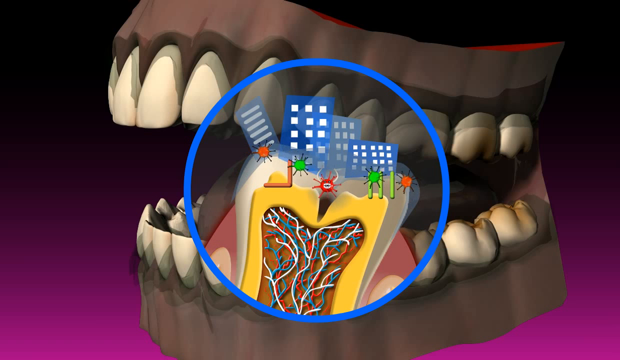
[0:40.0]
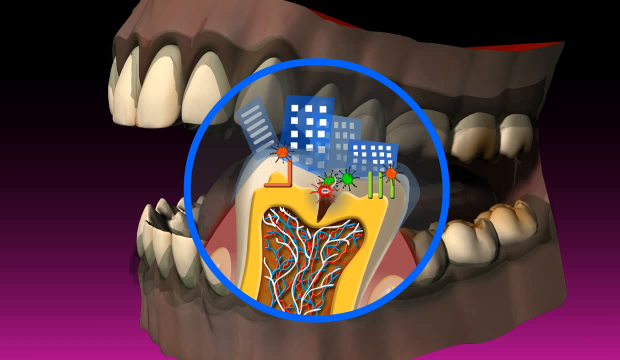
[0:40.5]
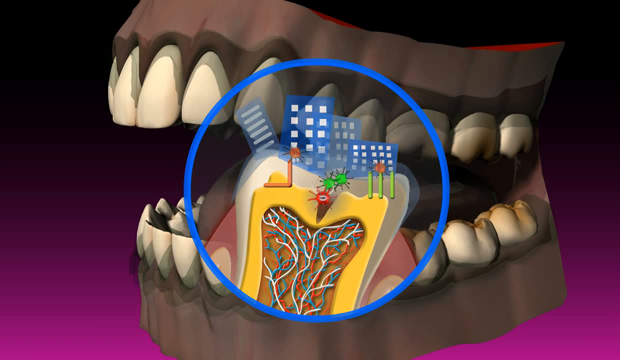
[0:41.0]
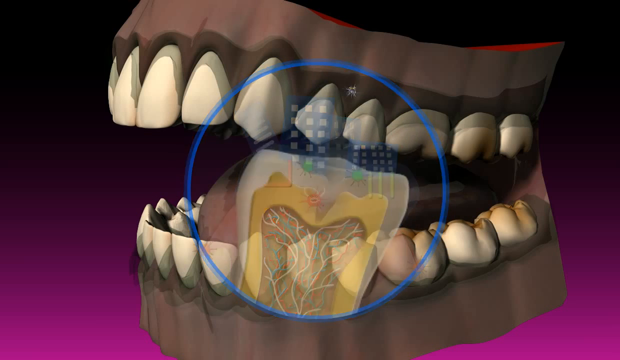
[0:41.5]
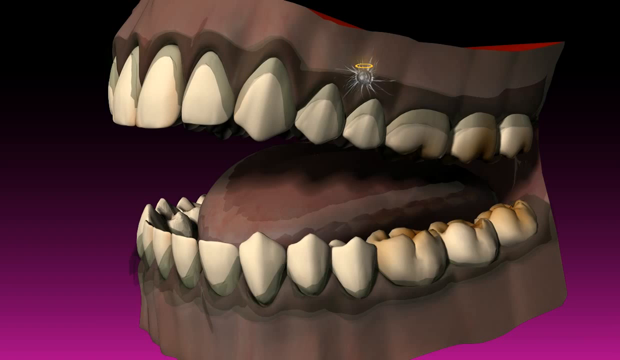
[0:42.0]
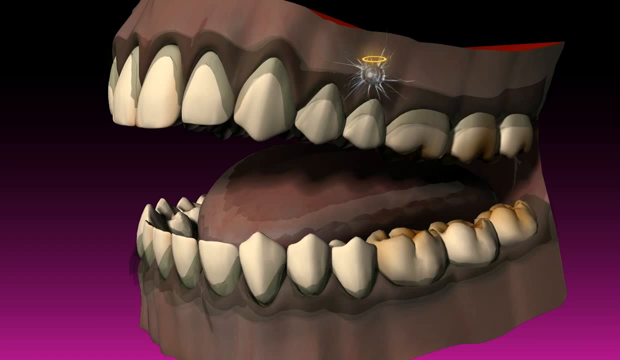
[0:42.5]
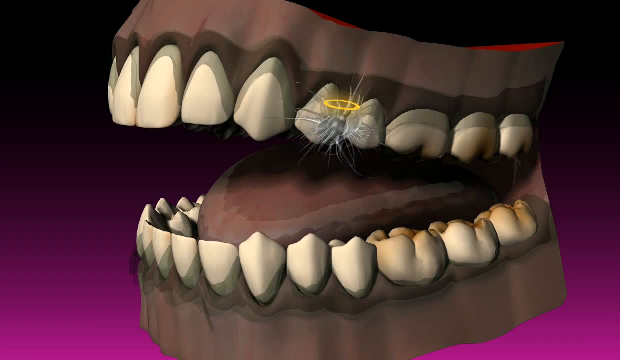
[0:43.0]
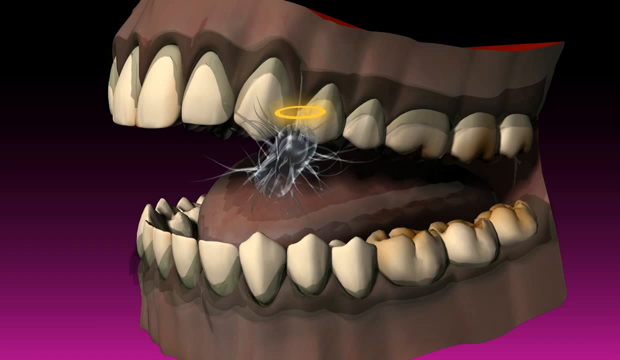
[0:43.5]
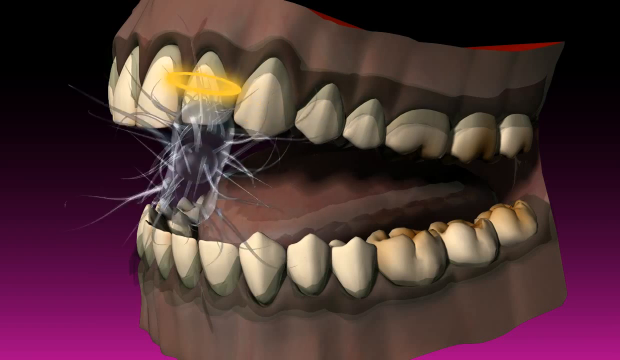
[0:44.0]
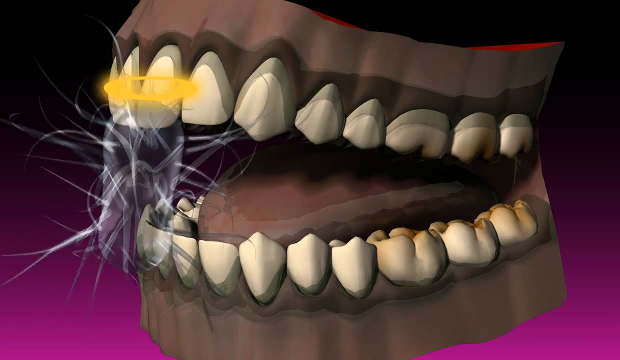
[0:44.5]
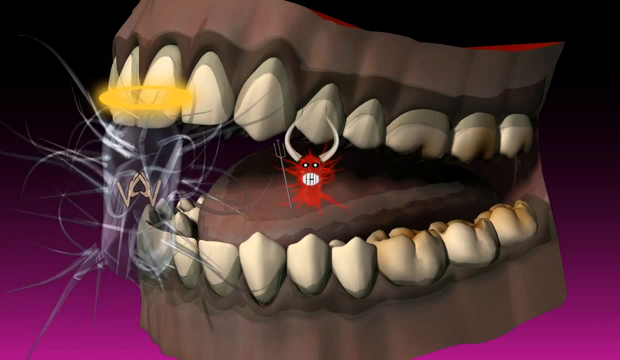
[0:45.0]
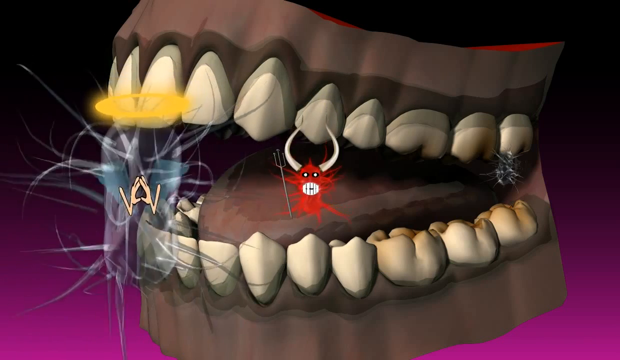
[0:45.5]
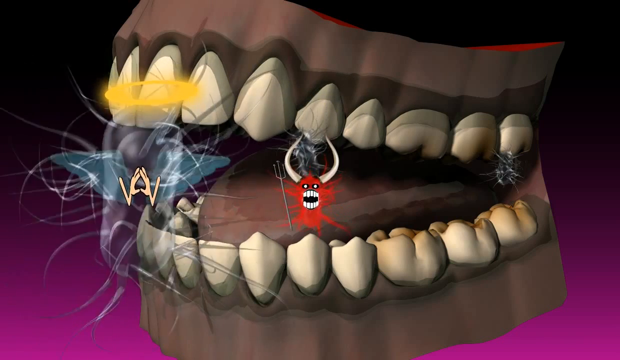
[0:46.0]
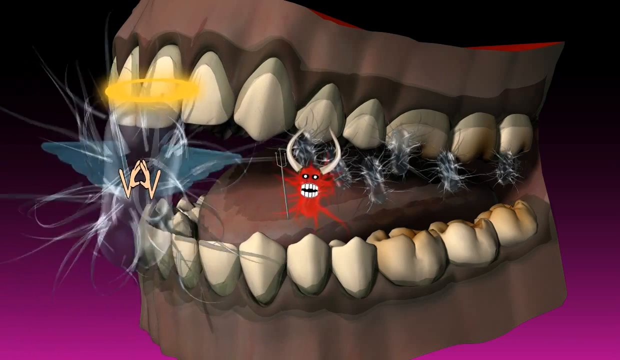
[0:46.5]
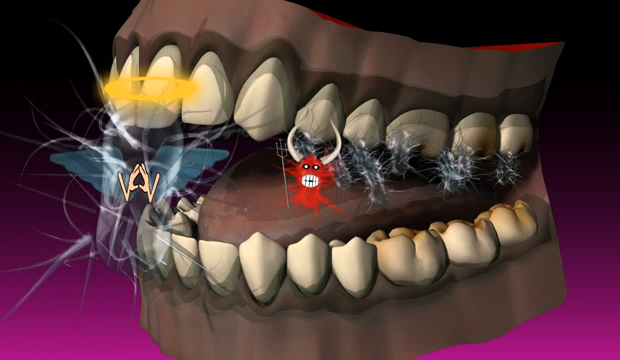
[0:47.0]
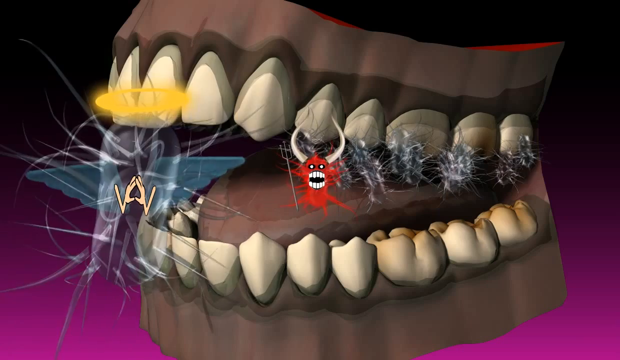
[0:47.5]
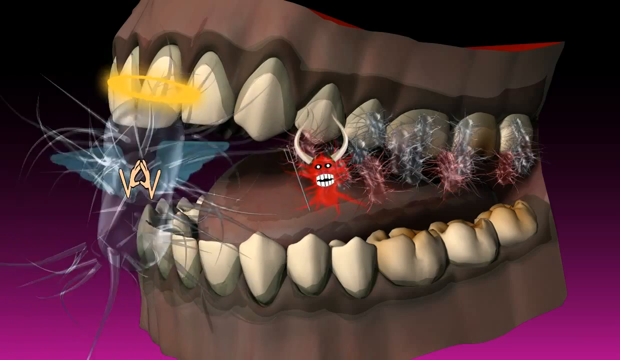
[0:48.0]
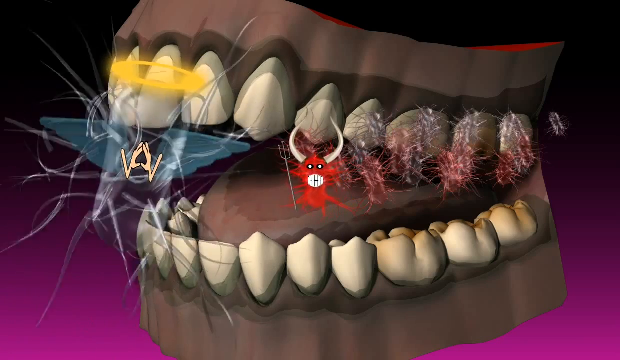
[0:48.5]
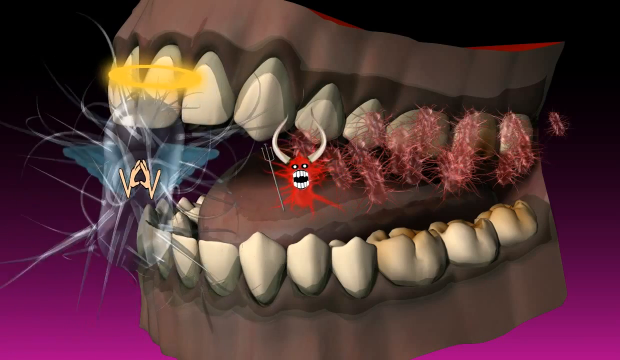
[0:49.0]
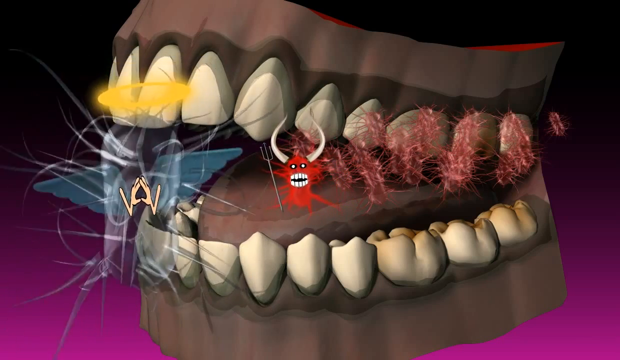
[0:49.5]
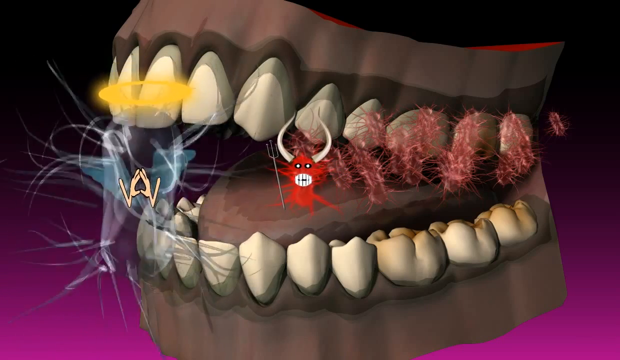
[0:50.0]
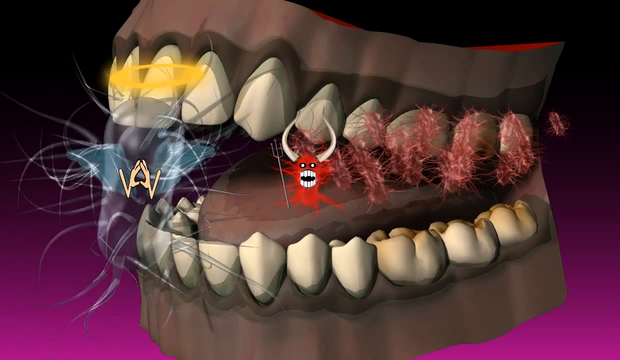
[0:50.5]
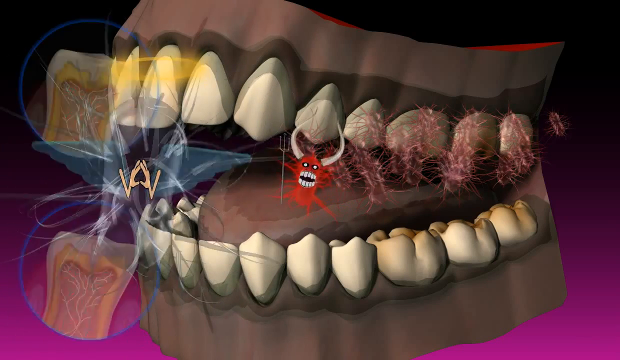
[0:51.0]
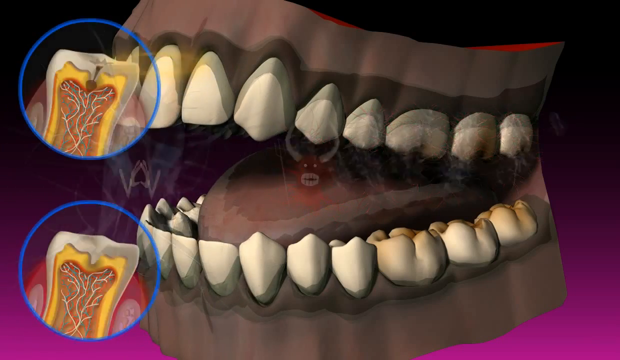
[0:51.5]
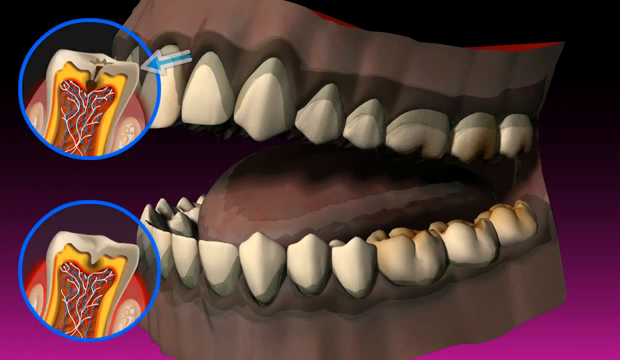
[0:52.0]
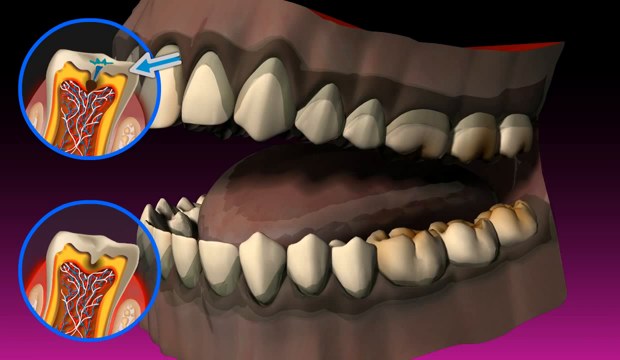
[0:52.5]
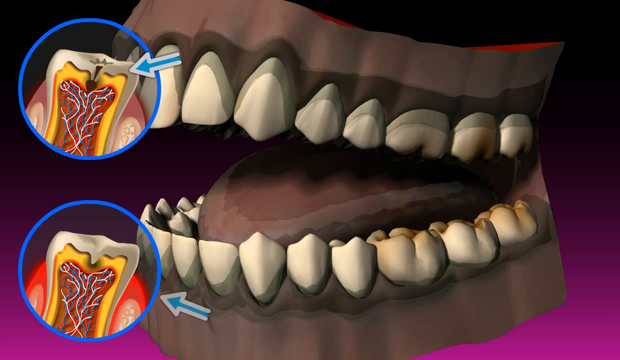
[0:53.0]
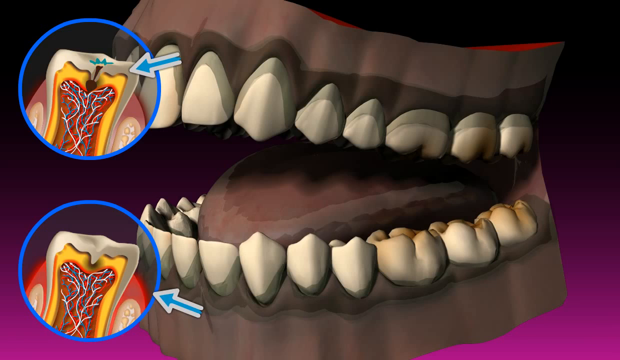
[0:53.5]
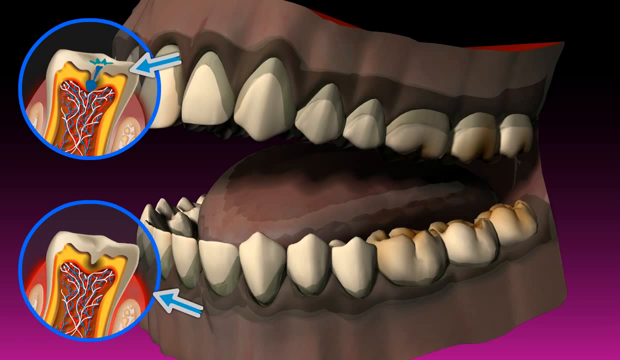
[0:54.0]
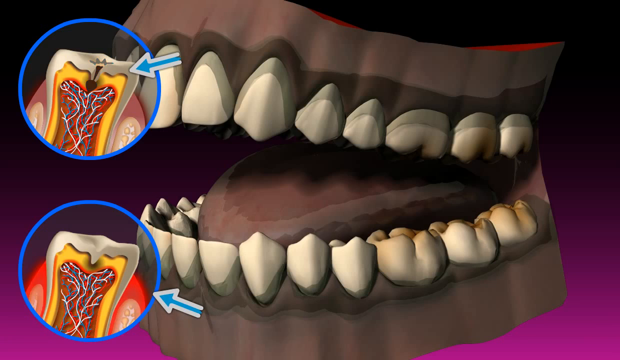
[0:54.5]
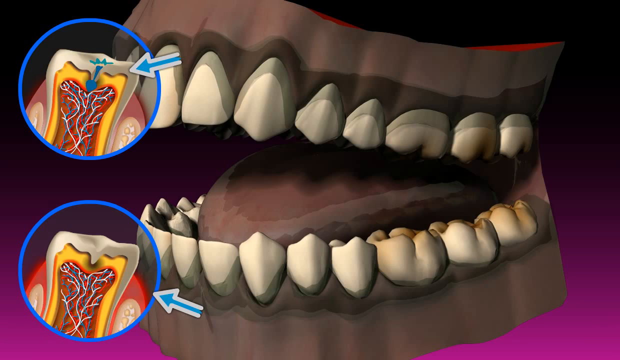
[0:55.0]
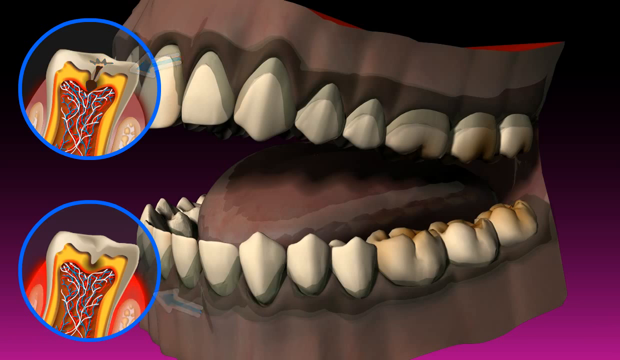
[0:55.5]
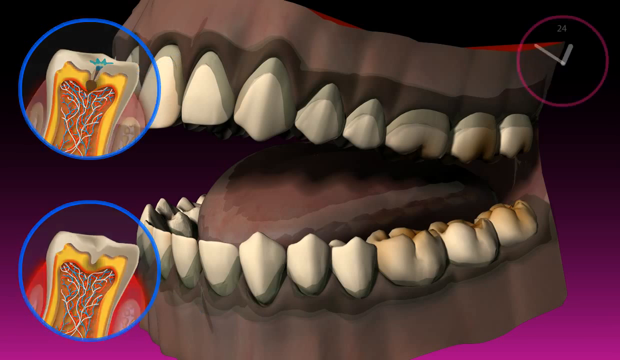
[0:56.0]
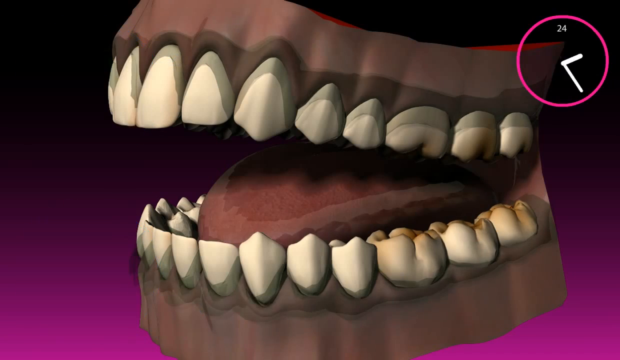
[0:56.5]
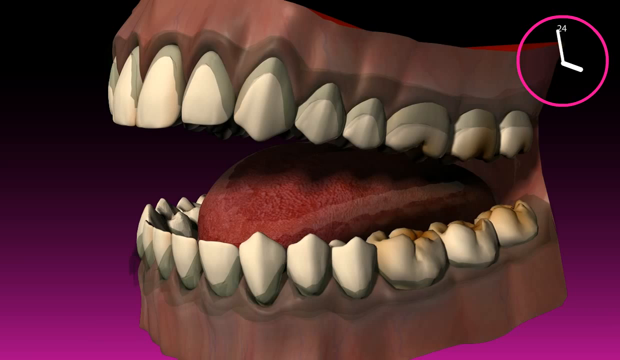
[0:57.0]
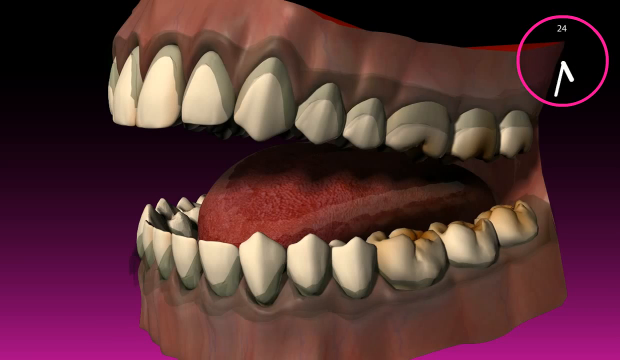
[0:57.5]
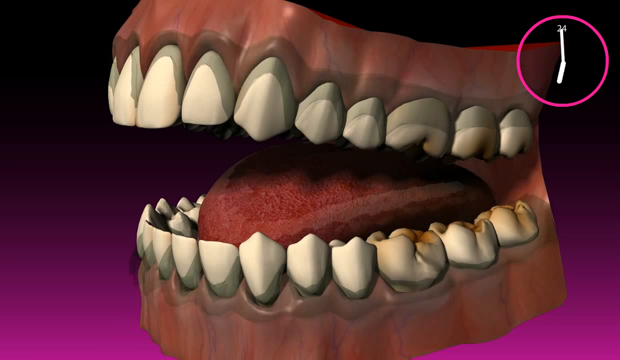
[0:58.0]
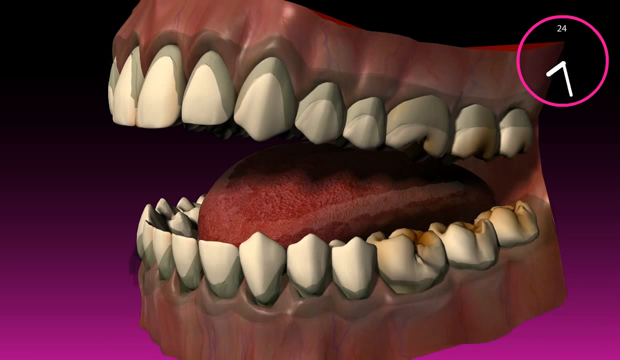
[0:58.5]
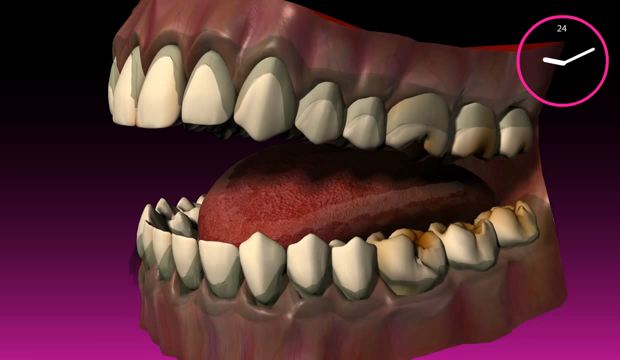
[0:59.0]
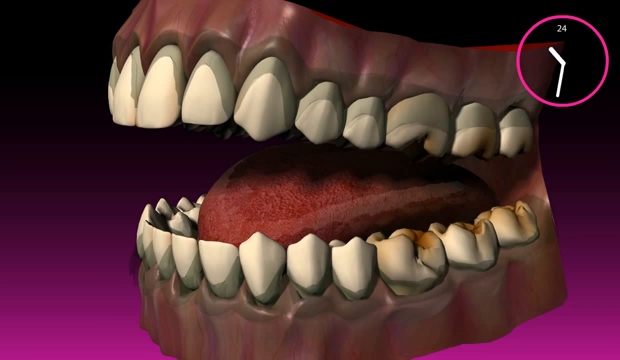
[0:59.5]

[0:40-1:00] A 3D animated view shows the gums and the top and bottom rows of teeth from the left side; the mouth area is a darker color. In the center of the screen is a large blue circle with a single white tooth; beneath the white exterior is a yellow section, and beneath that are multiple strands of white, red and blue nerves. Four blue rectangular skyscrapers with multiple white windows on a side sit on the top of the tooth, and little green and red organisms move around the top of the tooth. The single-tooth graphic goes away, and what appears to be almost an oval, translucent gray object appears, with little hair-like strands going around its entire sides and a yellow halo at the top. It appears in the background in one of the teeth in the mouth and comes to the forefront of the picture. In the middle appears an organism that looks like a little red devil with two horns and white teeth, similar to the spider-like objects that were on top of the single tooth with the skyscrapers. Several versions of the oval objects with hair-like strands, without halos, appear on the right side of the teeth; they turn from a translucent gray color to a more red color and sit on the right side of the teeth. These objects go away, and two blue circles appear on the left side of the screen. The top circle shows a white tooth with a yellow interior containing multiple red, white and blue nerve strands; it is to the left of the left side of the open mouth in the background, with an arrow pointing from the left side of the mouth to the circle. The circle beneath it shows a white tooth with a yellow interior and blue, white and red nerves, surrounded by gums that look more red than the gums around the tooth at the top. A blue arrow points to the lower right side of the bottom circle, and the gums around it flash red. In the top right, a pink abstract clock appears with white hour and minute hands moving around very quickly. The teeth begin to become more brown: the molars at the bottom become more brown and less white, and the teeth at the top have a gray coloring growing across them.